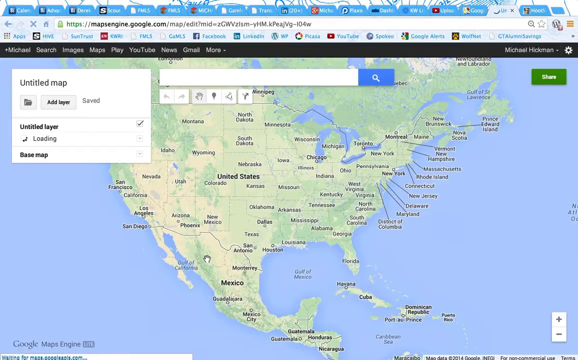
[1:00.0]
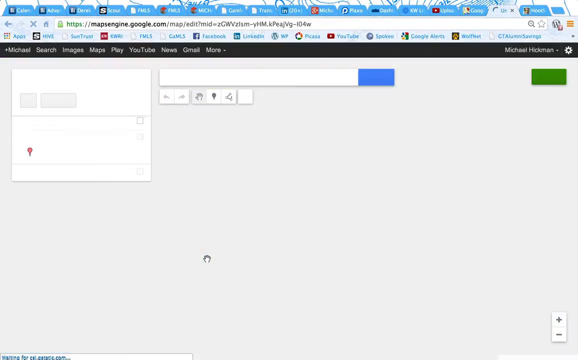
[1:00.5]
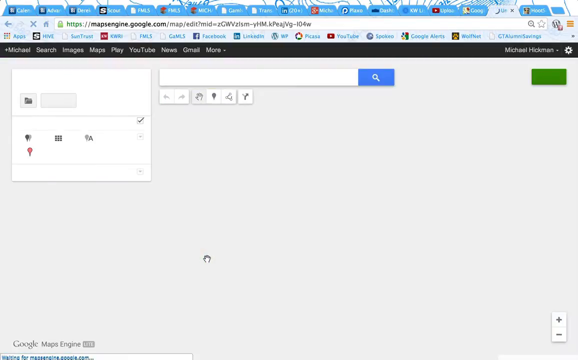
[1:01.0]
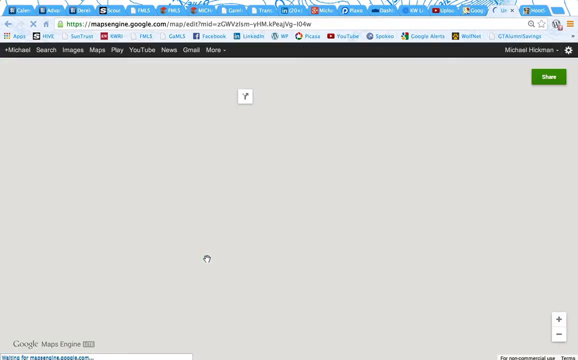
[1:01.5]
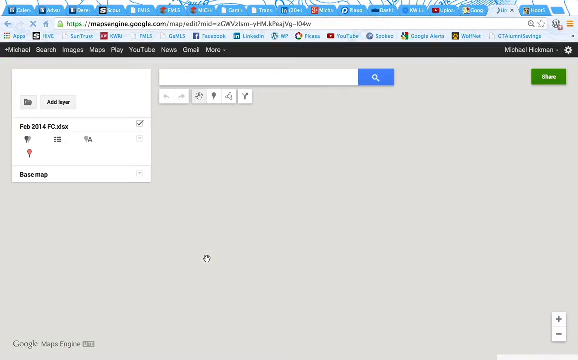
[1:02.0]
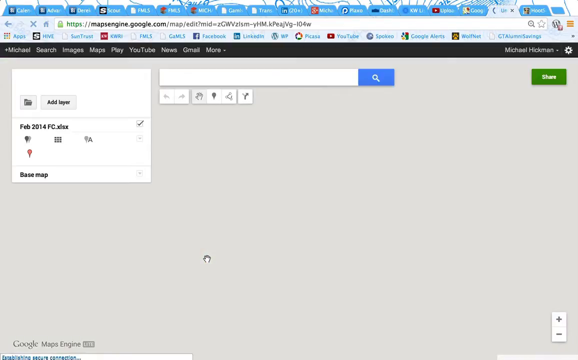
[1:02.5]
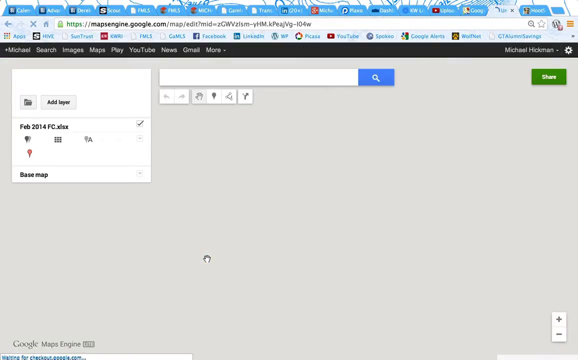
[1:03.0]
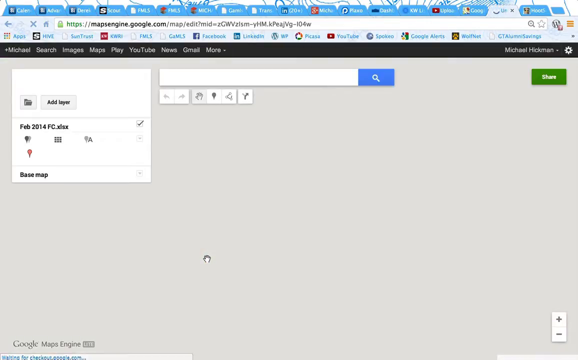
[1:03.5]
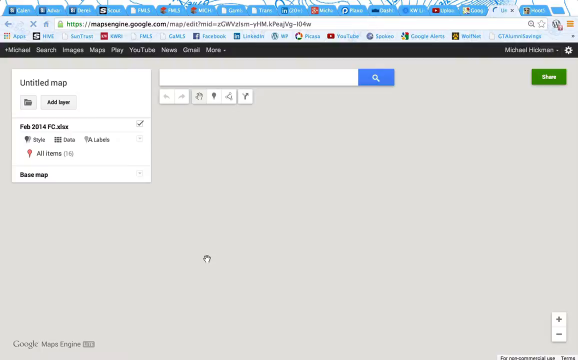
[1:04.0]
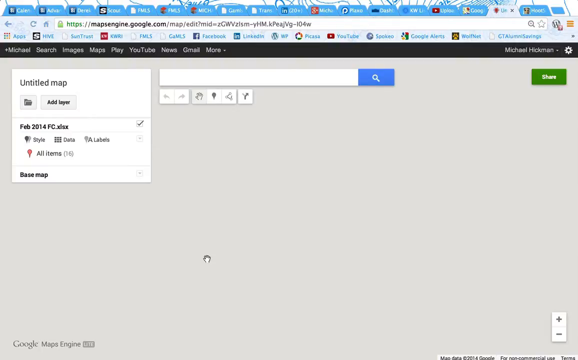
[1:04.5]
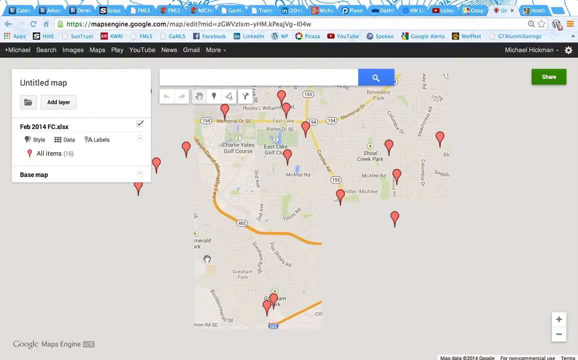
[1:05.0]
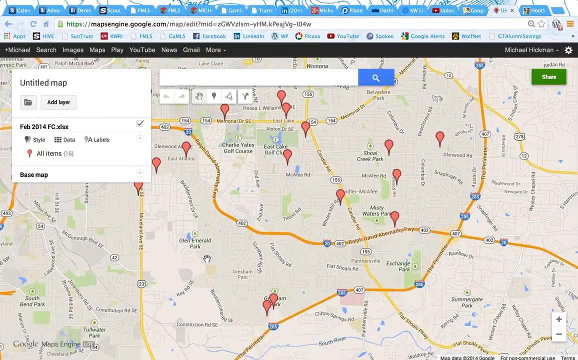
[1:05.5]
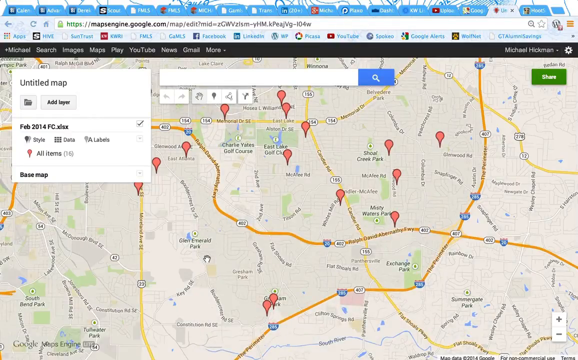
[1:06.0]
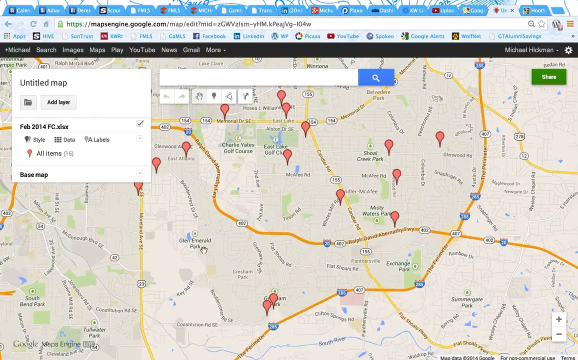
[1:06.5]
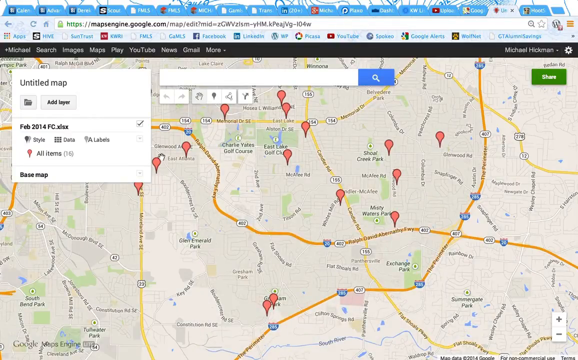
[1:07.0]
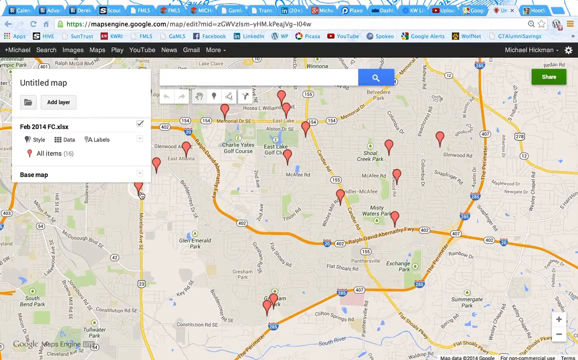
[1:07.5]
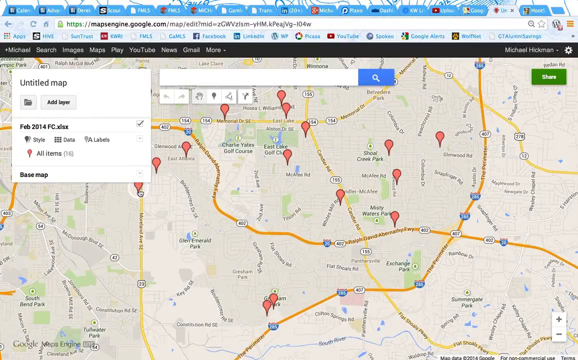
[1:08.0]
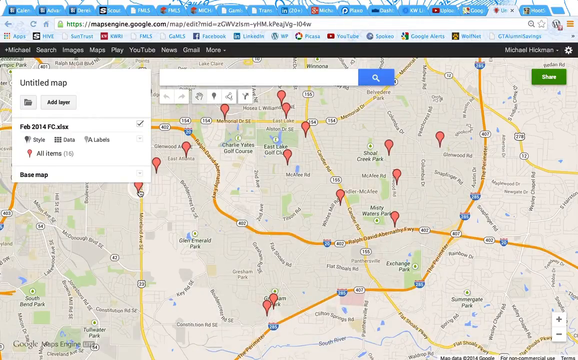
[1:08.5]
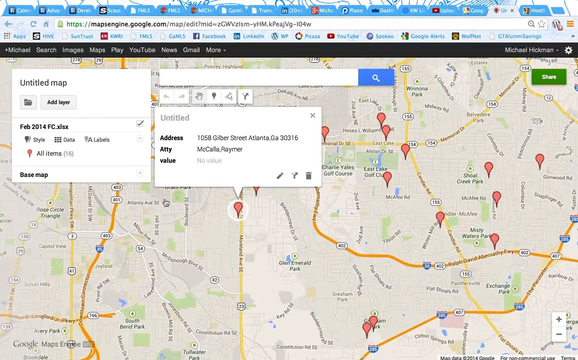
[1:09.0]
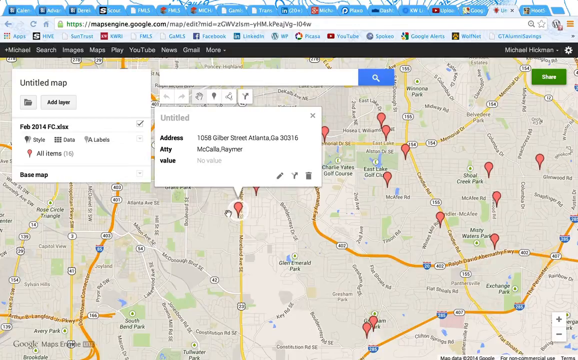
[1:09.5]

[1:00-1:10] On the Google Maps website, the user's mouse cursor configures map locations by clicking on options. A map loads with several locations marked by red location pins, about 14 in total. One pin has a pop-up text box that says "untitled," followed by an address and other details. The mouse pointer clicks on a map location.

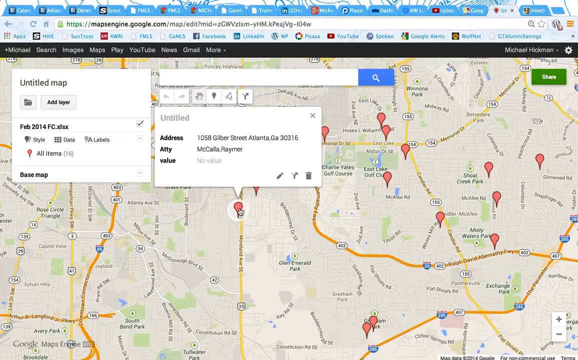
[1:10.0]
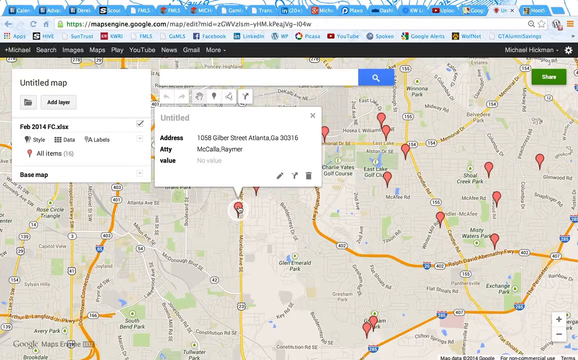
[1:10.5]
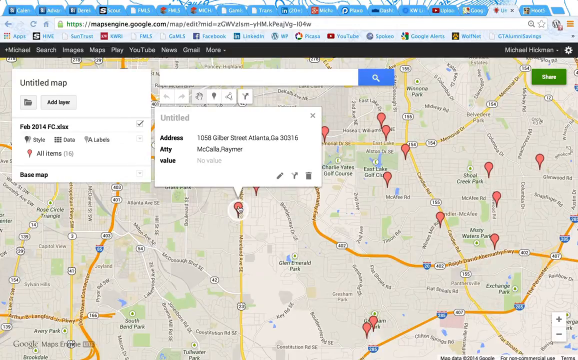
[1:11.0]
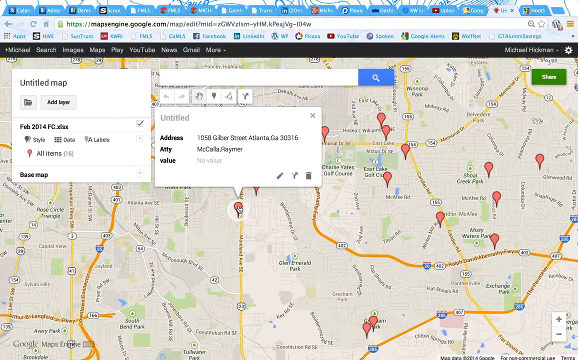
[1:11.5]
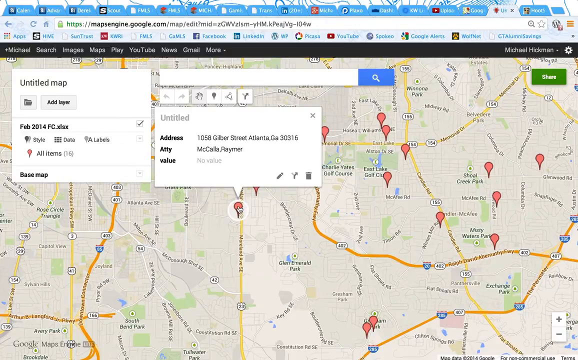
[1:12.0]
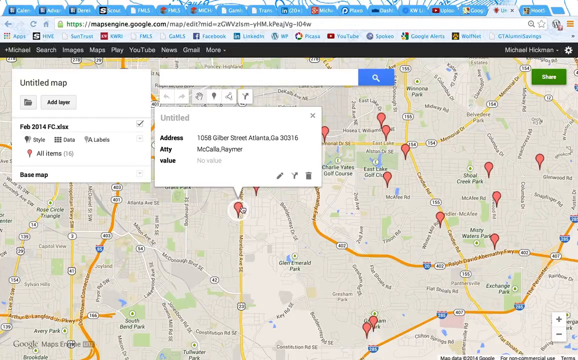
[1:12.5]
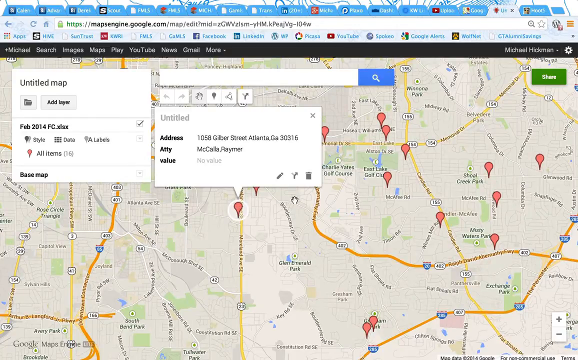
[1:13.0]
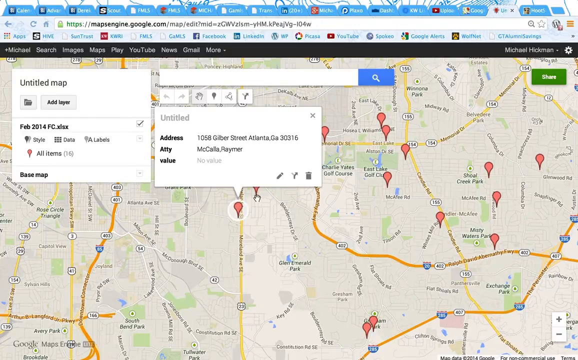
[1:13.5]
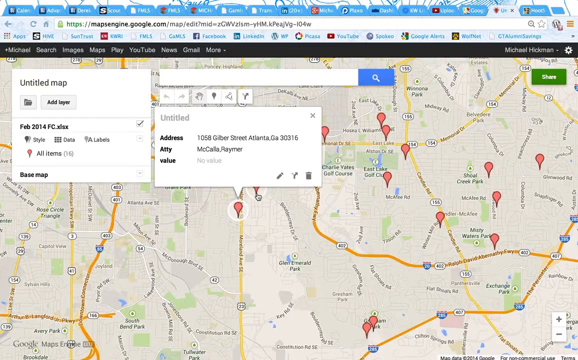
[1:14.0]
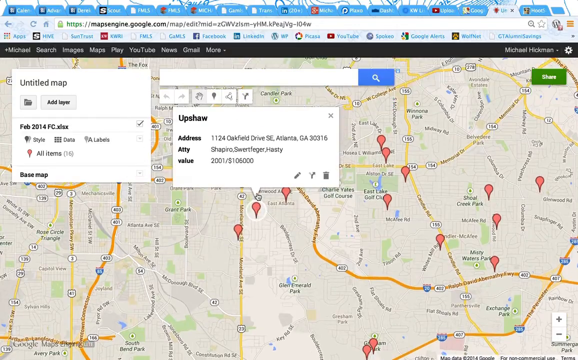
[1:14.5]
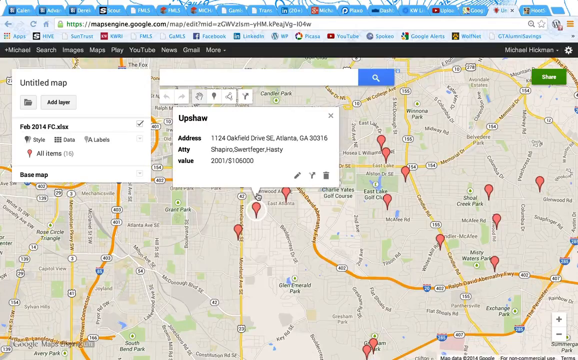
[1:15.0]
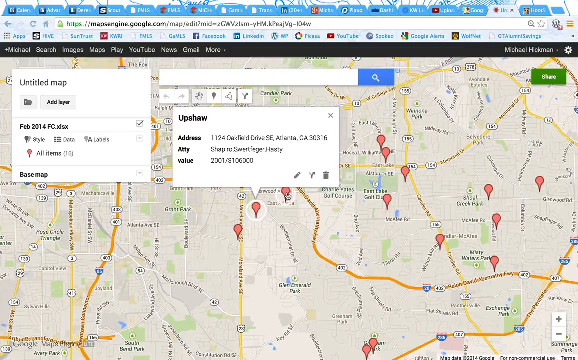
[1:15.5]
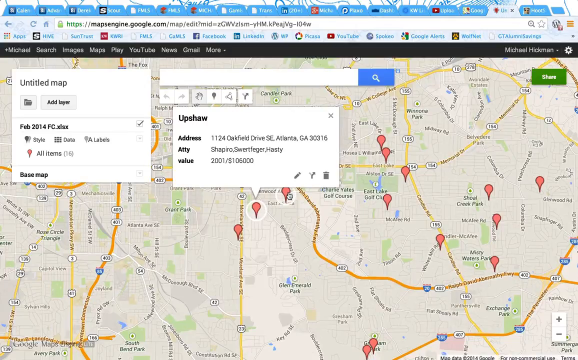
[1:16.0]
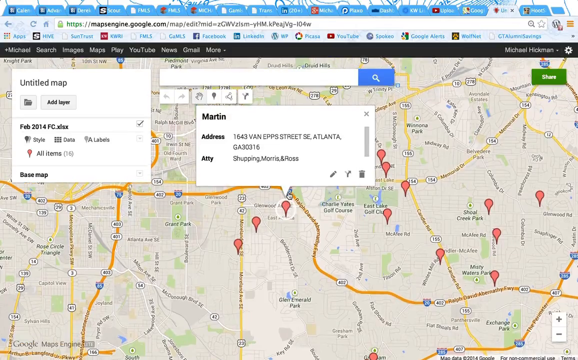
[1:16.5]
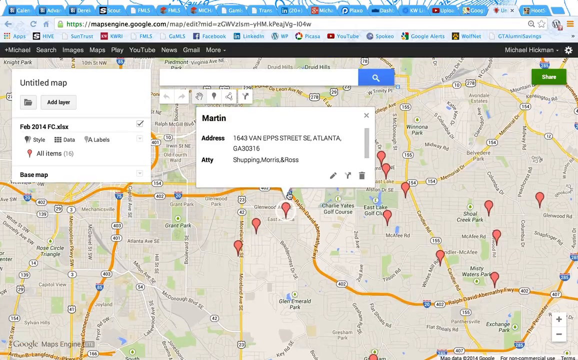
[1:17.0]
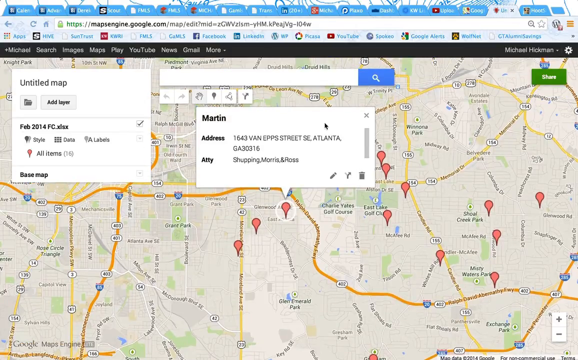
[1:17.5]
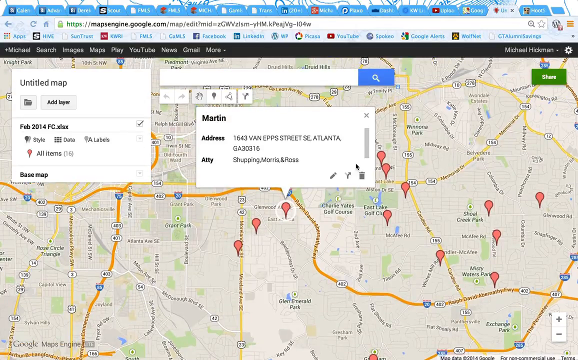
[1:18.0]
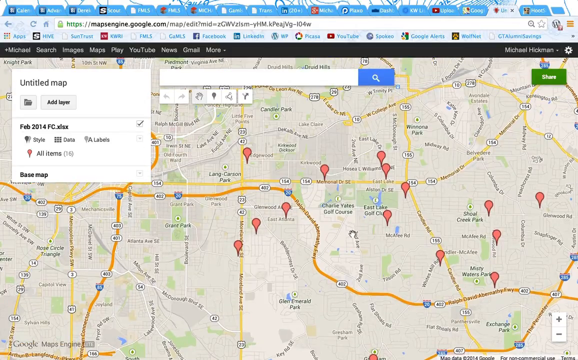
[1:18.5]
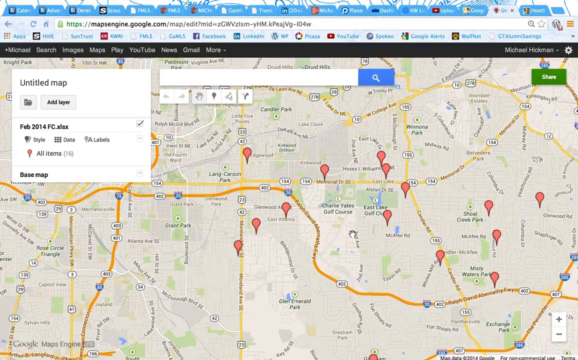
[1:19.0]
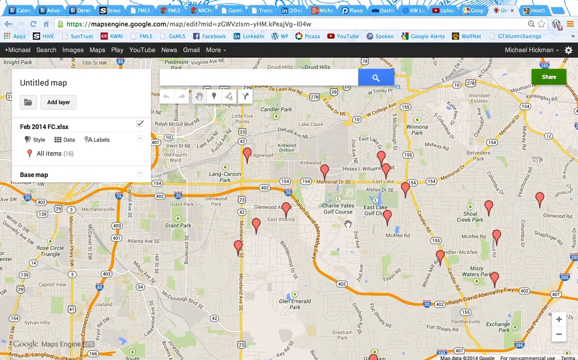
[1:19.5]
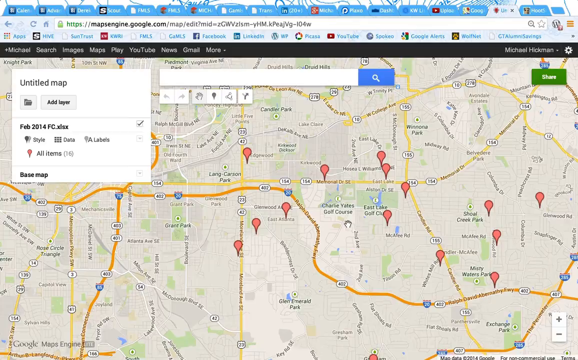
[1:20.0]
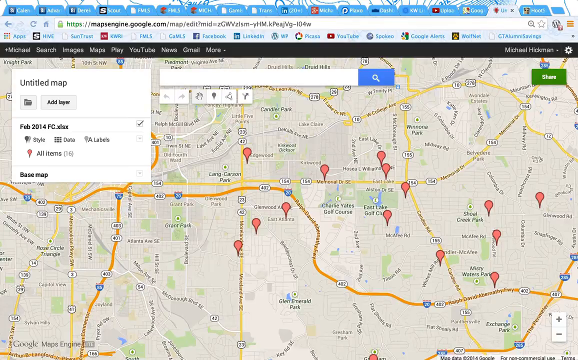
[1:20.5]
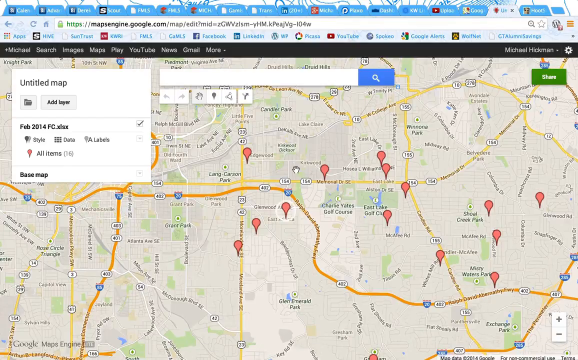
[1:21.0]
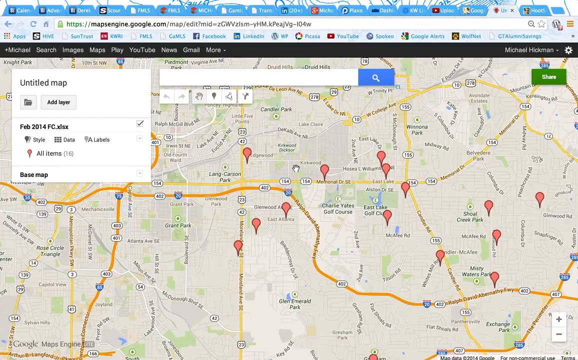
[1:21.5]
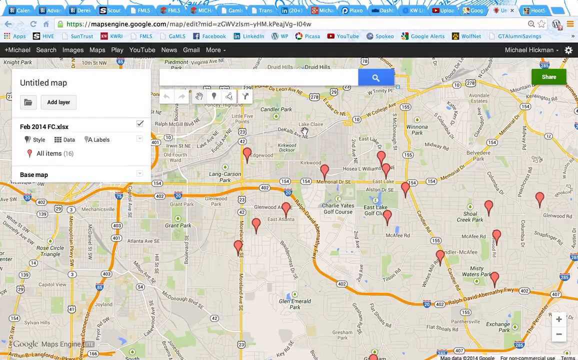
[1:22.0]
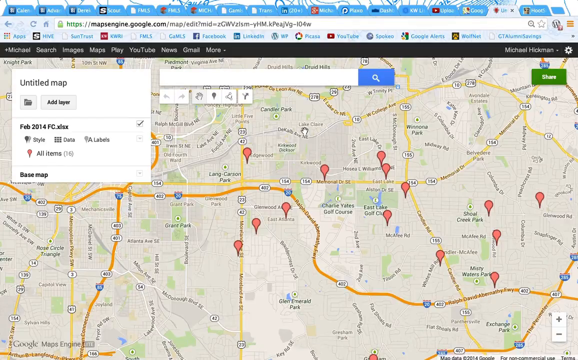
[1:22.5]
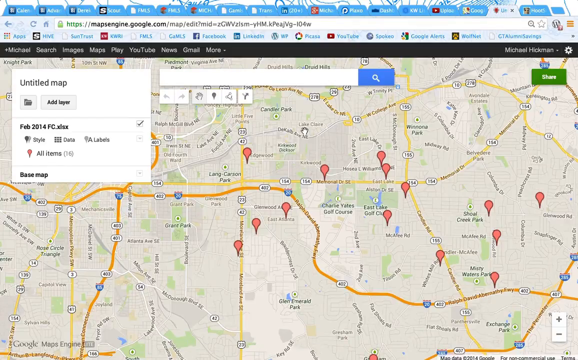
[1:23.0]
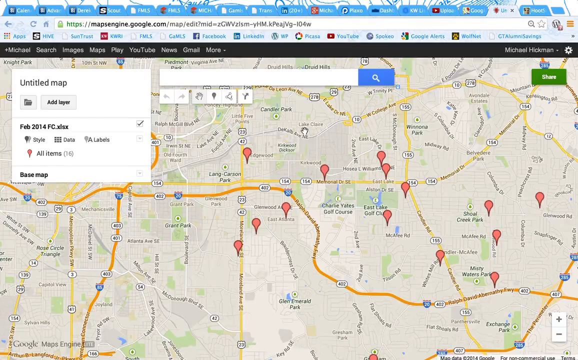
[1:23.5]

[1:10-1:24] A Google map engine page shows the address written at the top of the screen and a map with several red location pins. Two white text boxes contain details for addresses, and the one in the middle points to a map location. The mouse tracker moves slowly to the right across the map, scrolls up, and clicks to close the white box in the middle. It continues to hover over the screen and selects an area, opening another location pane as a white box. The tracker closes this second box and then scrolls upwards to open yet another location pane. A green share button is in the upper right corner of the map.